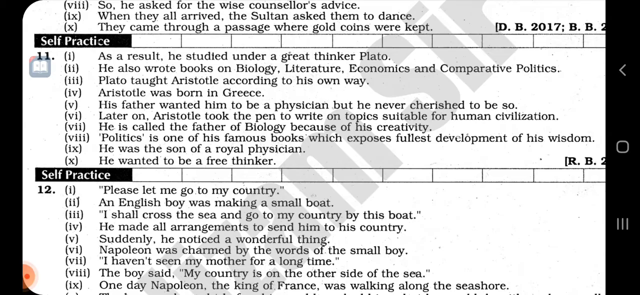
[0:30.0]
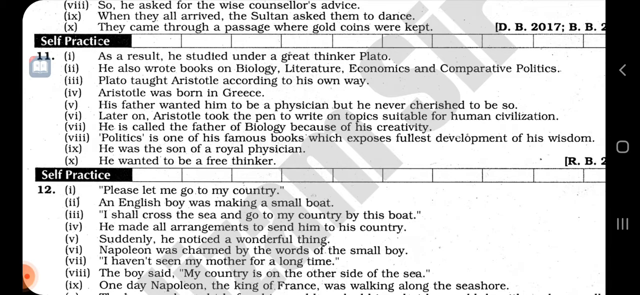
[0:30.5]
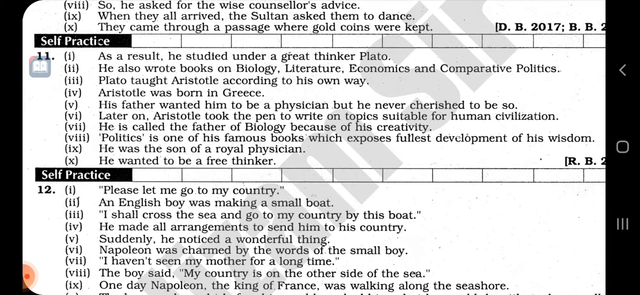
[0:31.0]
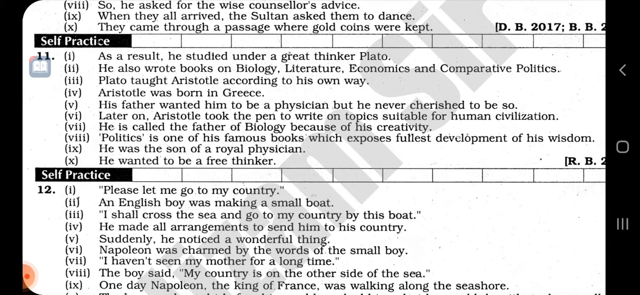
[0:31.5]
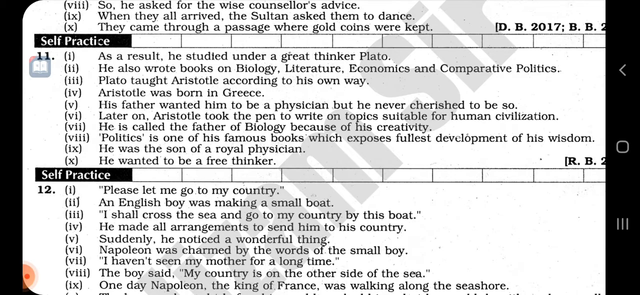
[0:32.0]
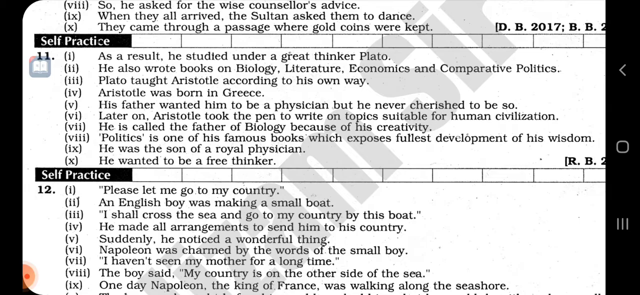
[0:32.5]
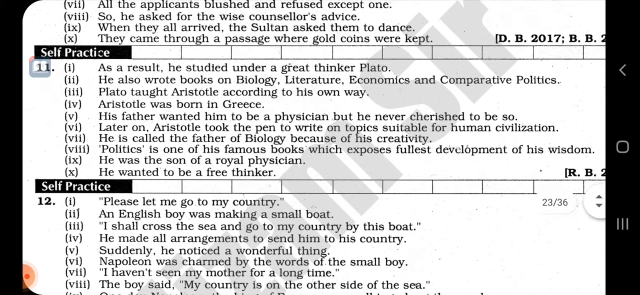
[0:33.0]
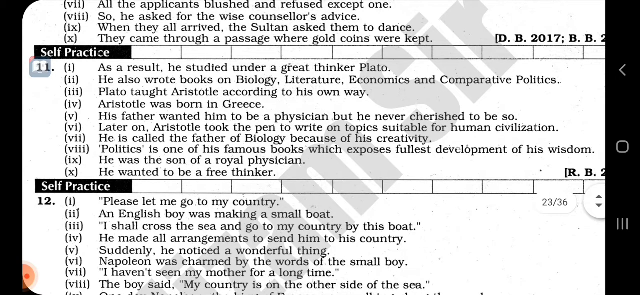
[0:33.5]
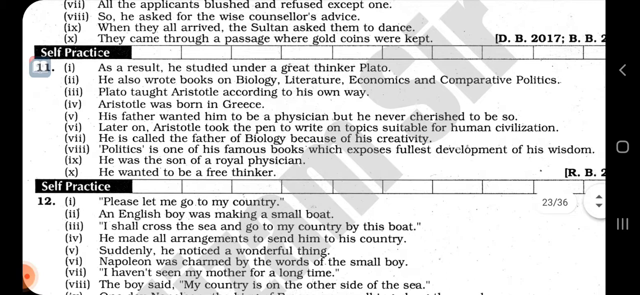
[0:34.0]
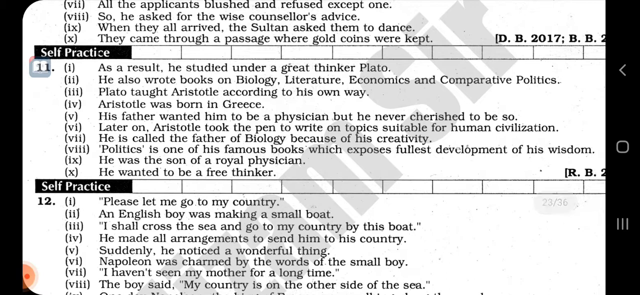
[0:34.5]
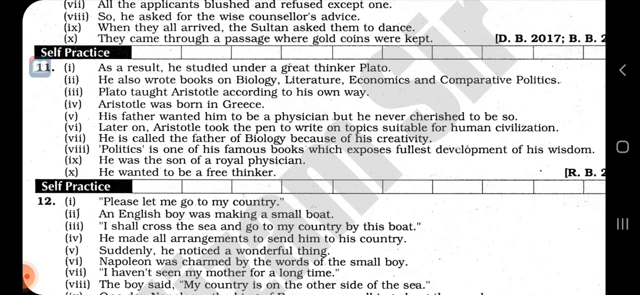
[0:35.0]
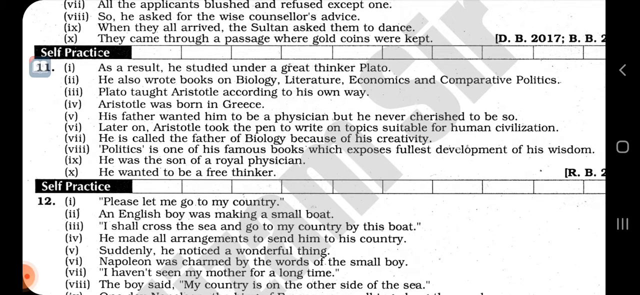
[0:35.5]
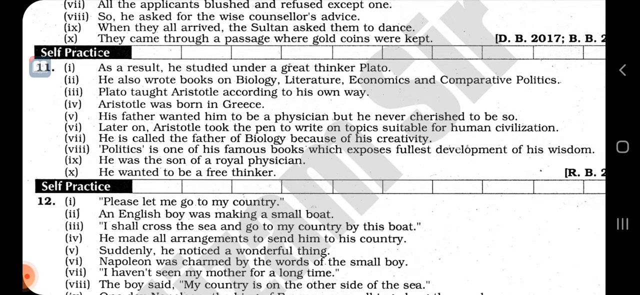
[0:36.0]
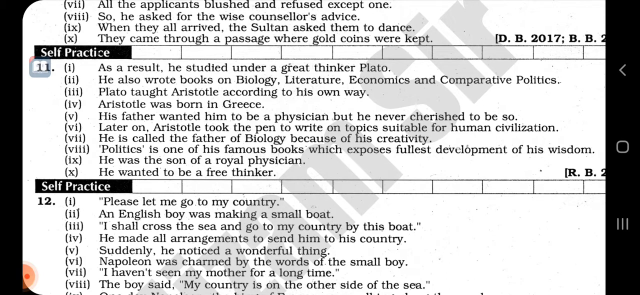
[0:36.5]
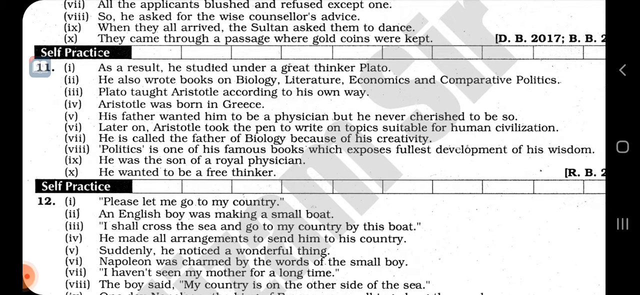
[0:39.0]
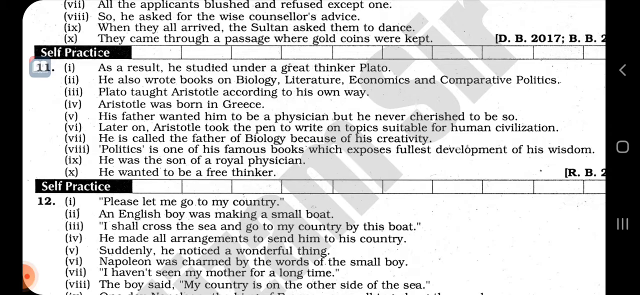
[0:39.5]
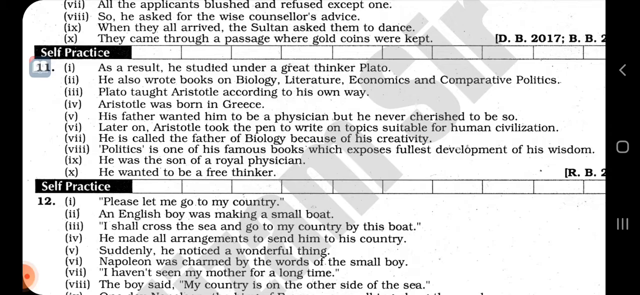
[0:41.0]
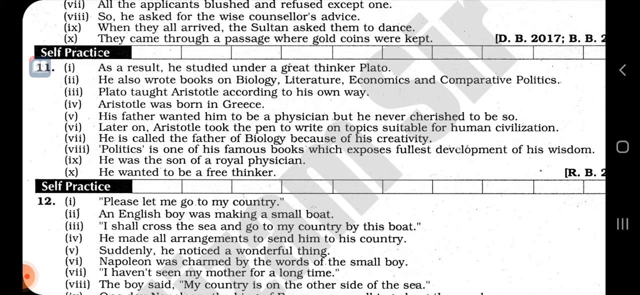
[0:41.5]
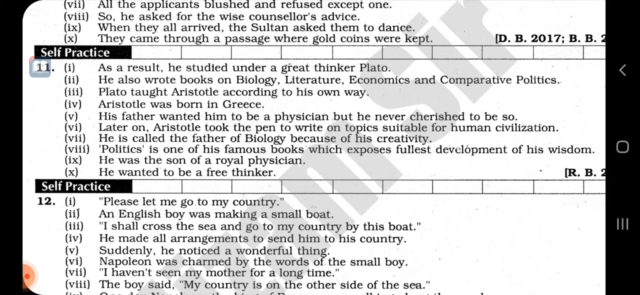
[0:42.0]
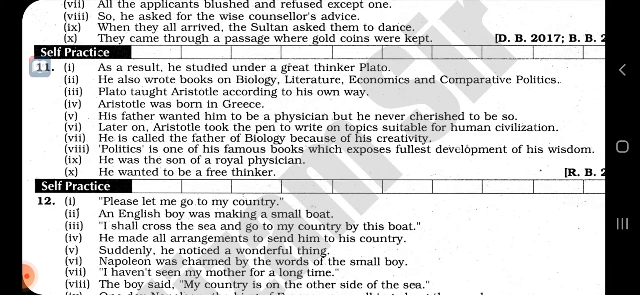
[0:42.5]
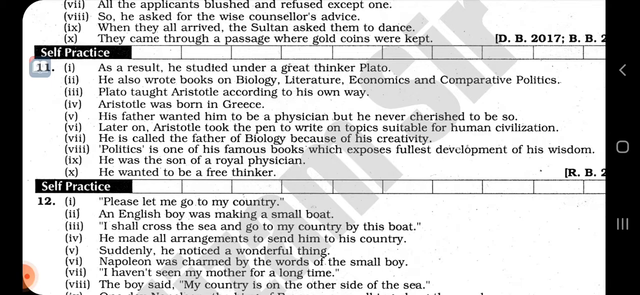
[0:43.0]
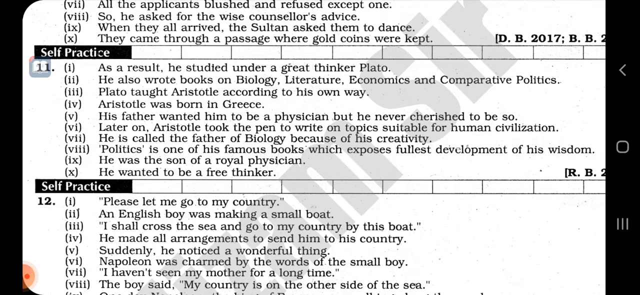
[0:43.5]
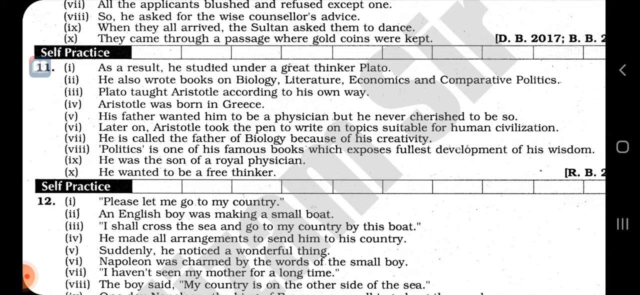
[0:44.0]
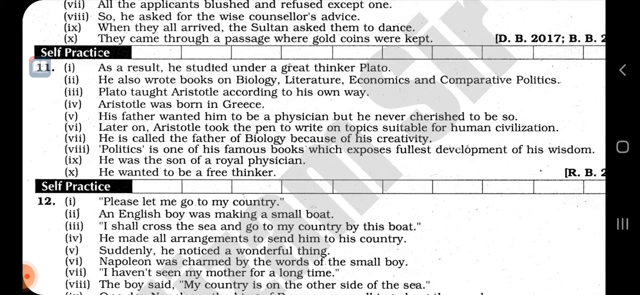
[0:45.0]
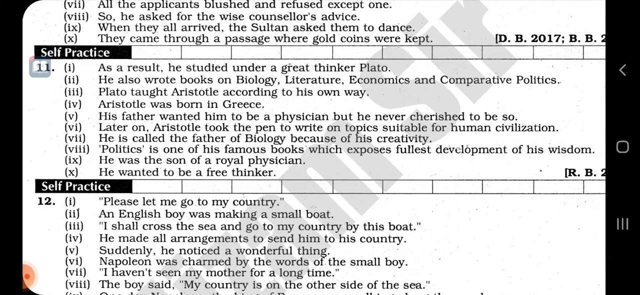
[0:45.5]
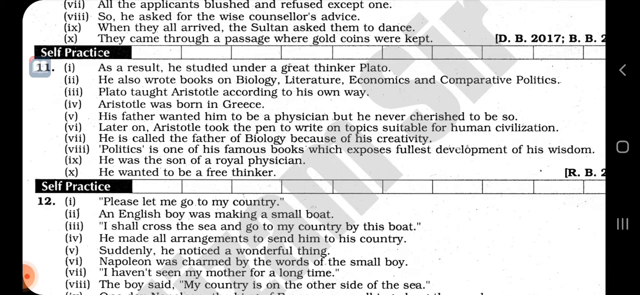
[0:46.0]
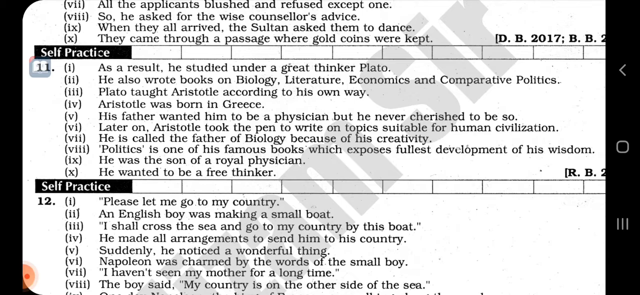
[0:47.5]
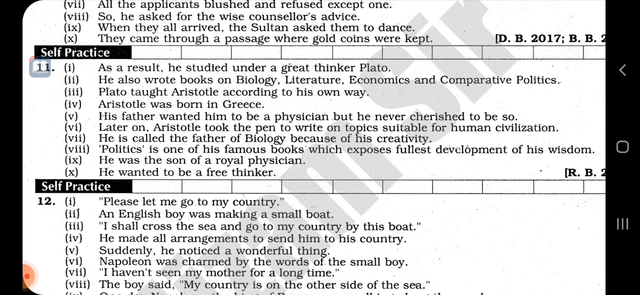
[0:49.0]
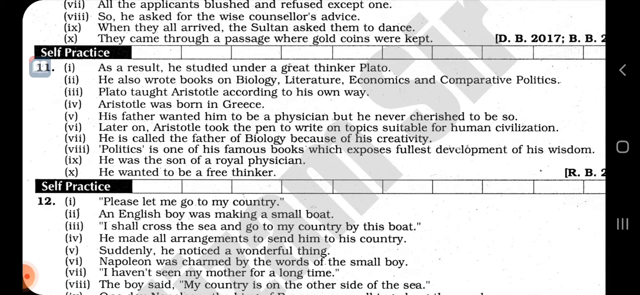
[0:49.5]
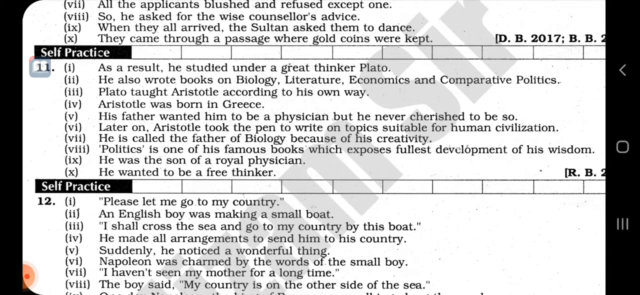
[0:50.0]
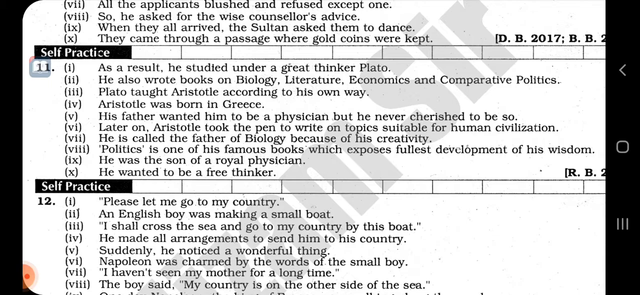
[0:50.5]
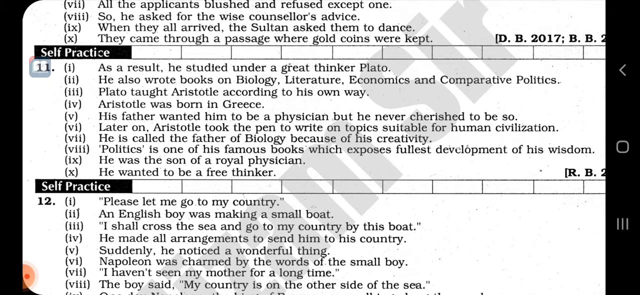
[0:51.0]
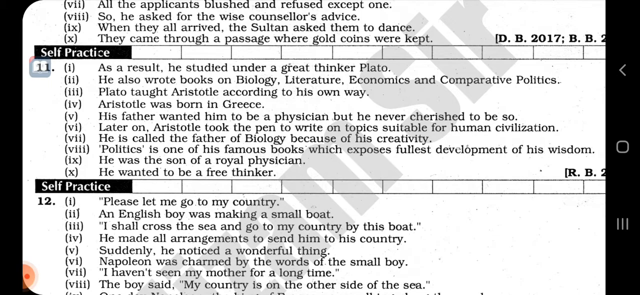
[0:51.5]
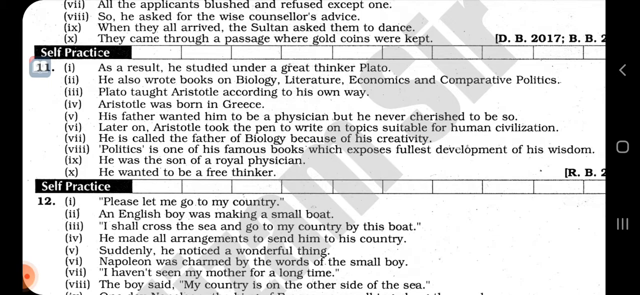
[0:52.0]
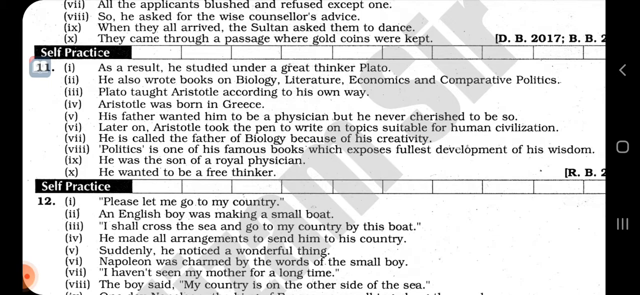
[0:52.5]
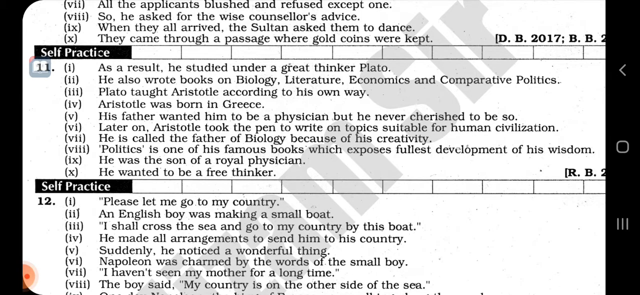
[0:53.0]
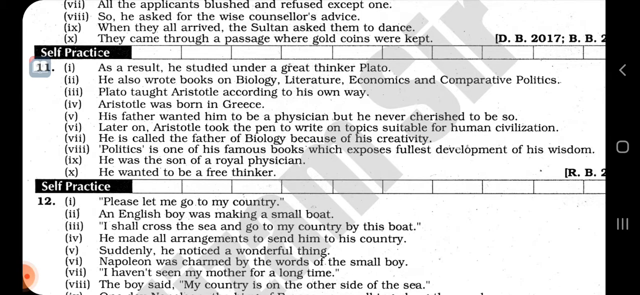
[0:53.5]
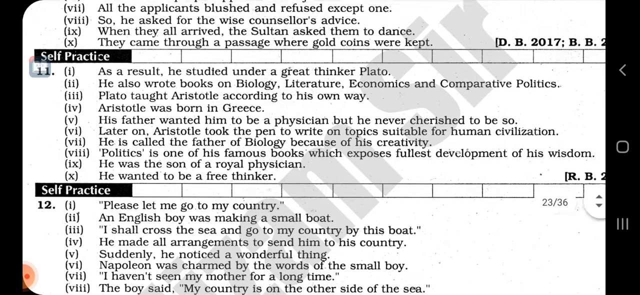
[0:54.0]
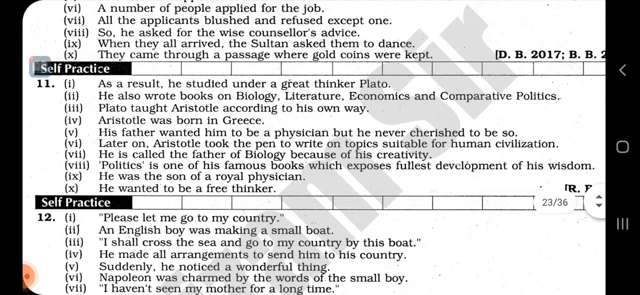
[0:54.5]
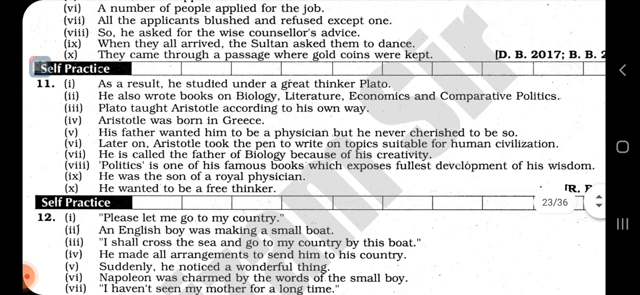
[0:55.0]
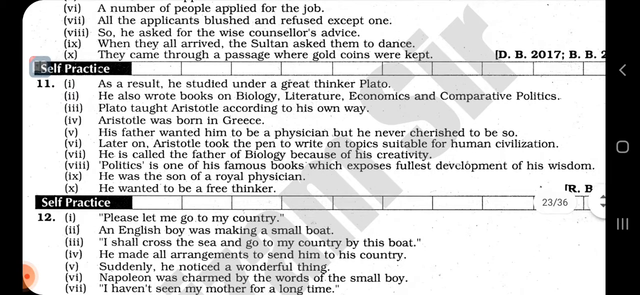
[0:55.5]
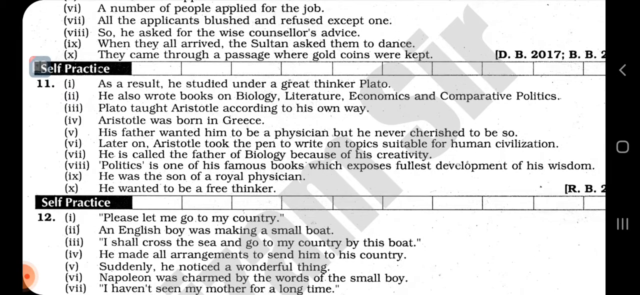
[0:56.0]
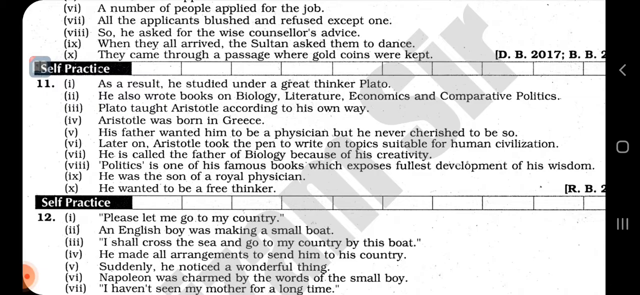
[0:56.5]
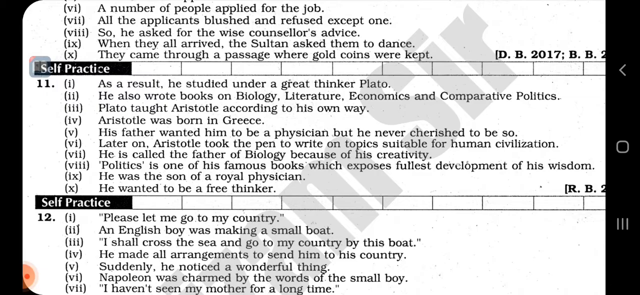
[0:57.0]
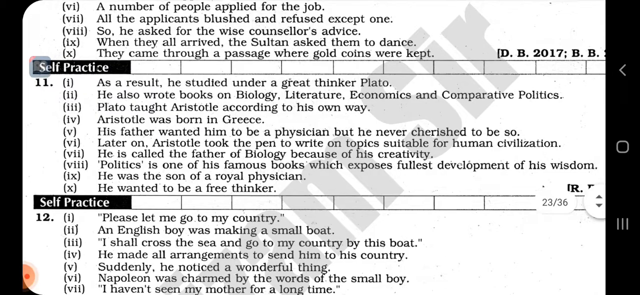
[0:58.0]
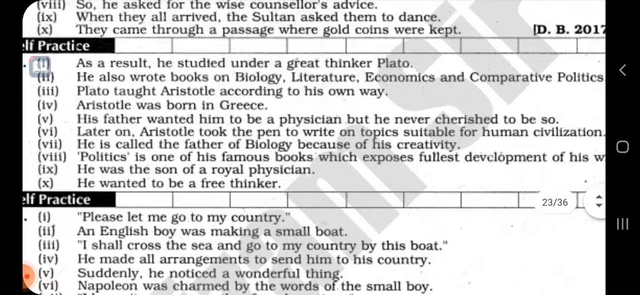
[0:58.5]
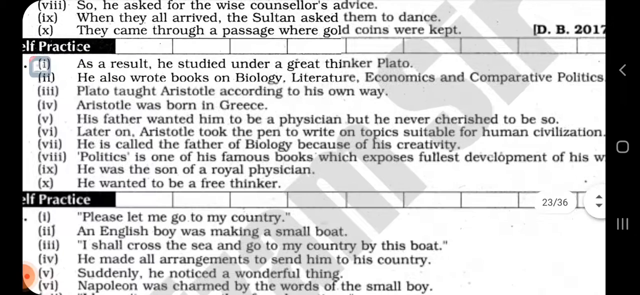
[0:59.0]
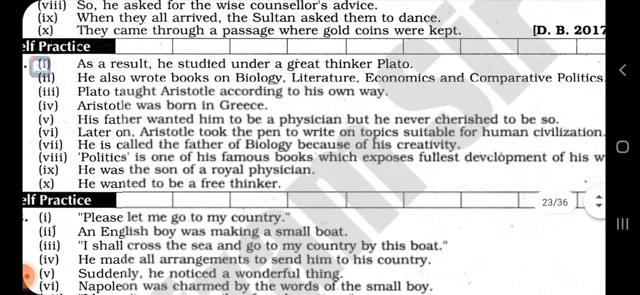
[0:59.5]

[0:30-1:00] Questions 11 and 12 remain on screen. In the bottom left corner there is a small red dot inside a bigger, less red dot. For question 11, option one reads "as a result, he studied under a great thinker Plato," option two reads "he also wrote books on biology, literature, economics, and comparative politics," option three reads "Plato taught Aristotle according to his own way," option four reads "Aristotle was born in Greece," and option five reads "his father wanted him to be a physician, but he never cherished to be so." The options appear to continue through all 10; they could be either statements about the subject or choices from which a correct one must be picked. At one point the screen zooms in slightly and the words become blurry. A small scroll indicator on the right reads "23 out of 36."